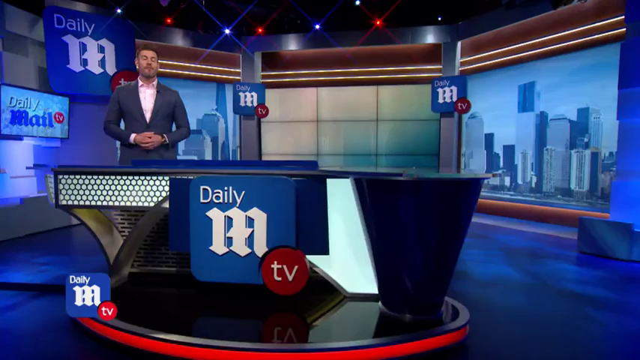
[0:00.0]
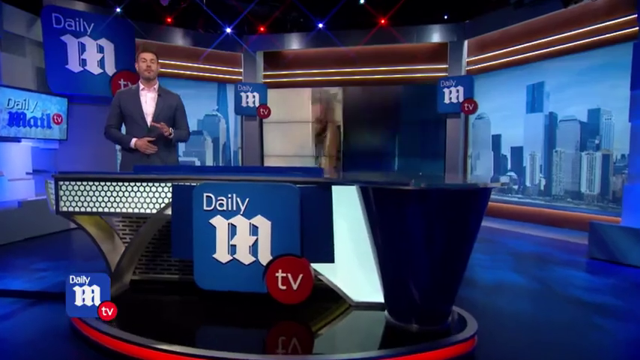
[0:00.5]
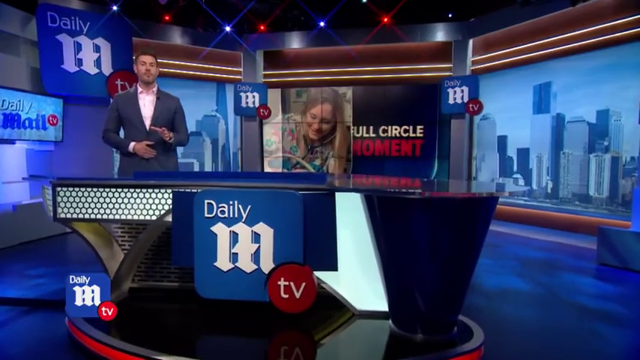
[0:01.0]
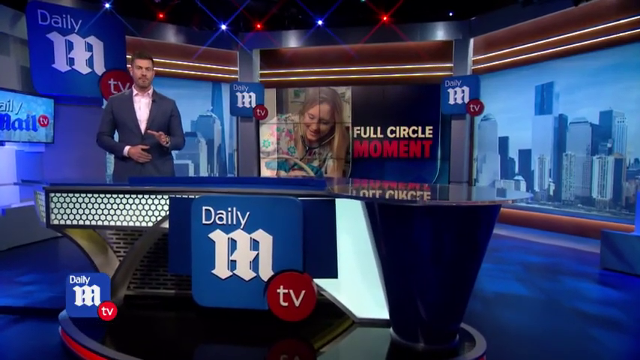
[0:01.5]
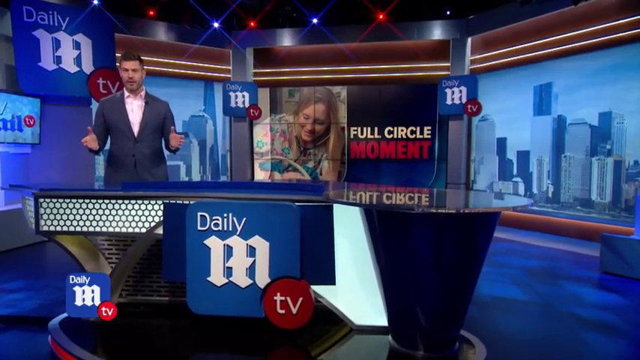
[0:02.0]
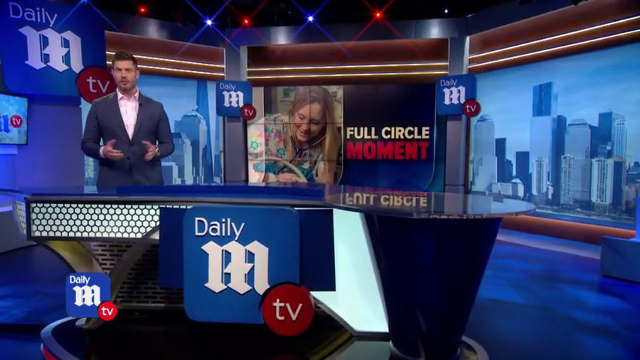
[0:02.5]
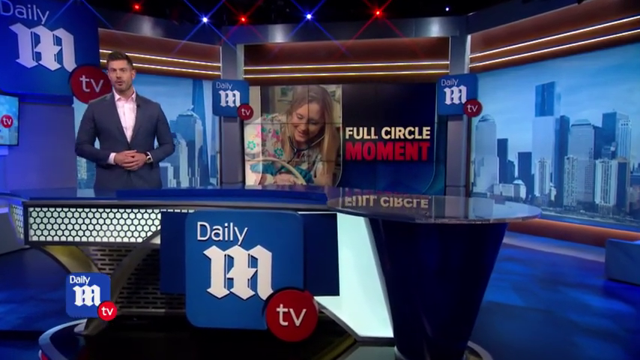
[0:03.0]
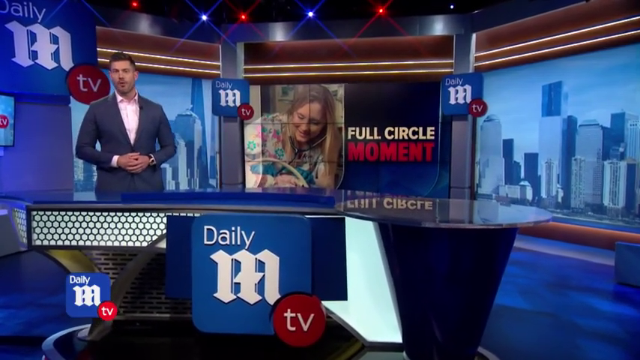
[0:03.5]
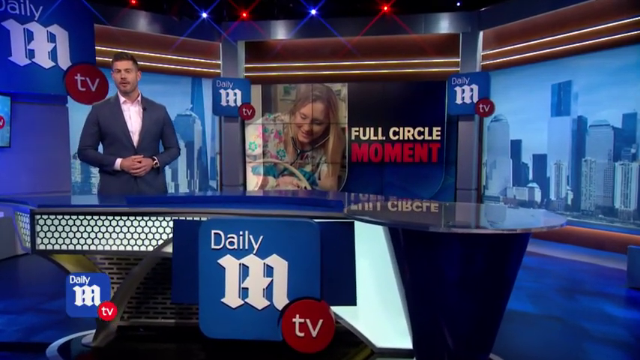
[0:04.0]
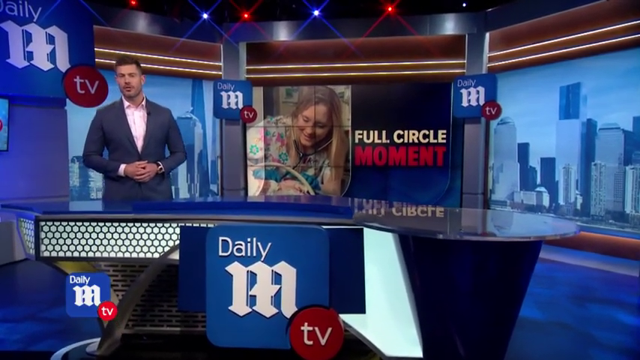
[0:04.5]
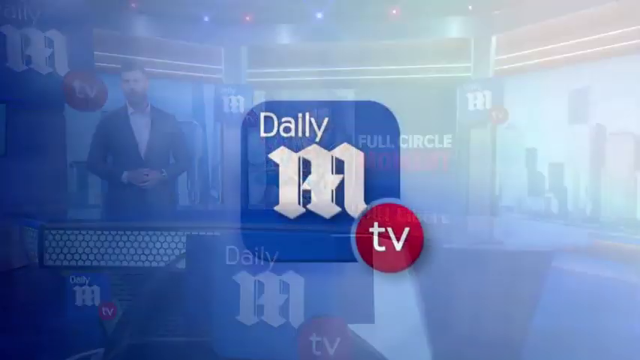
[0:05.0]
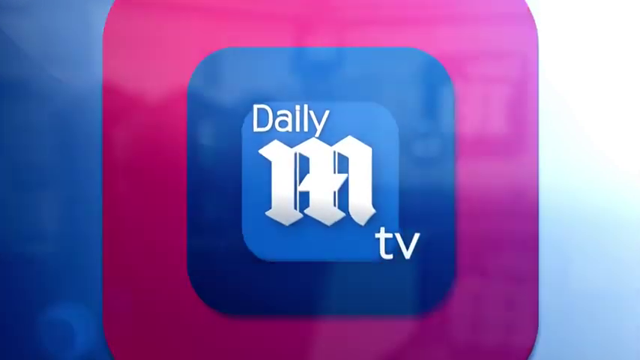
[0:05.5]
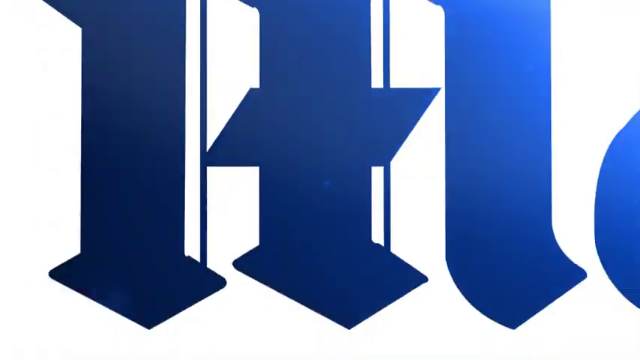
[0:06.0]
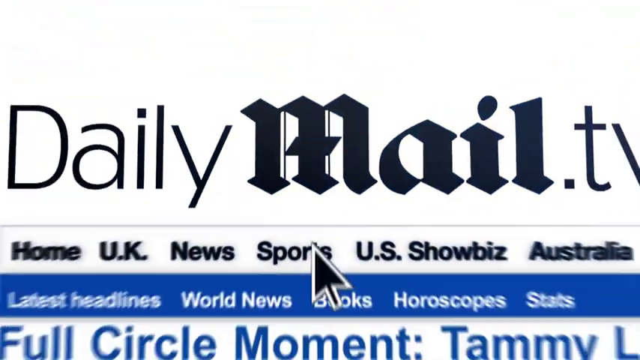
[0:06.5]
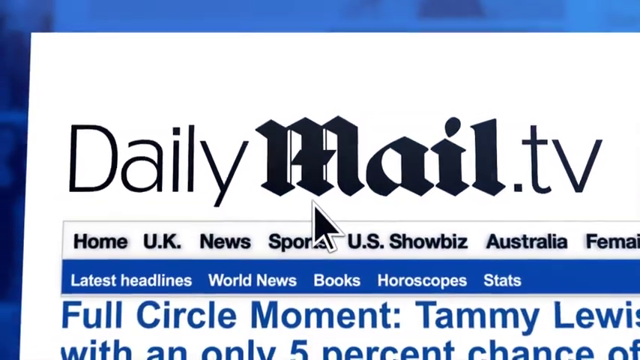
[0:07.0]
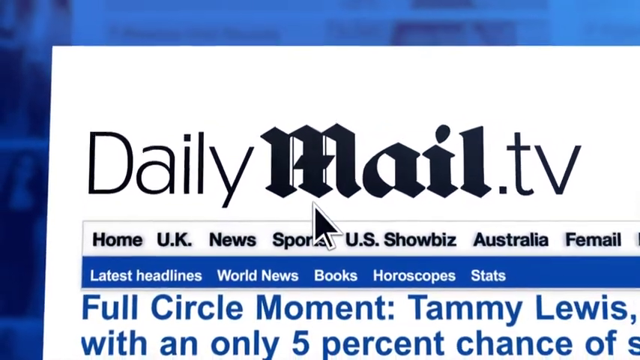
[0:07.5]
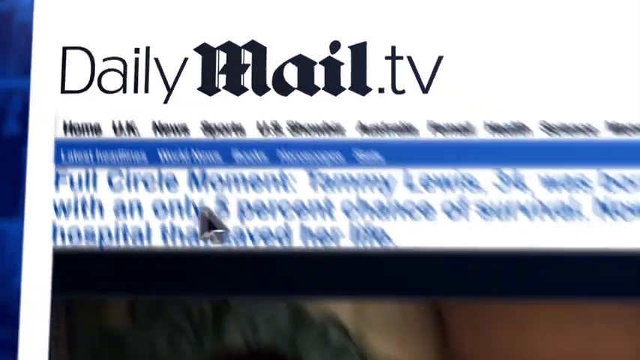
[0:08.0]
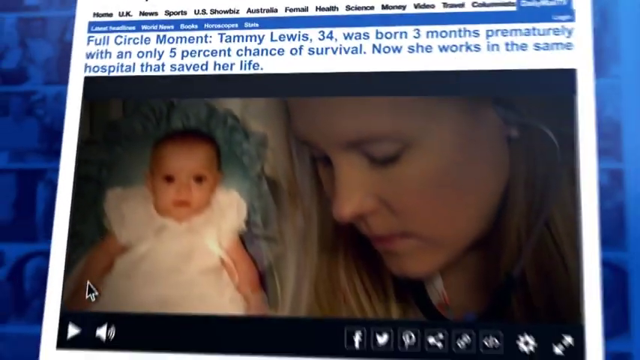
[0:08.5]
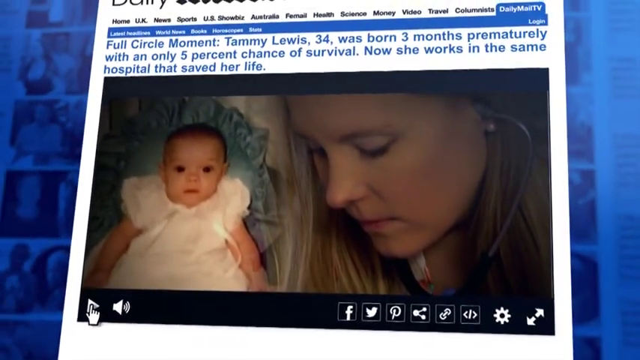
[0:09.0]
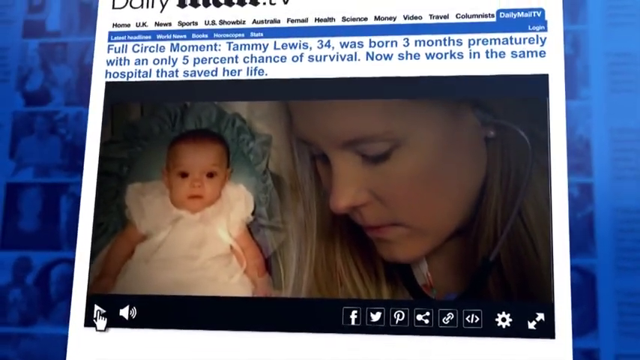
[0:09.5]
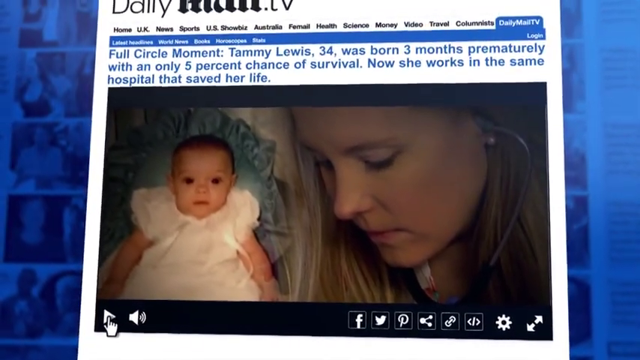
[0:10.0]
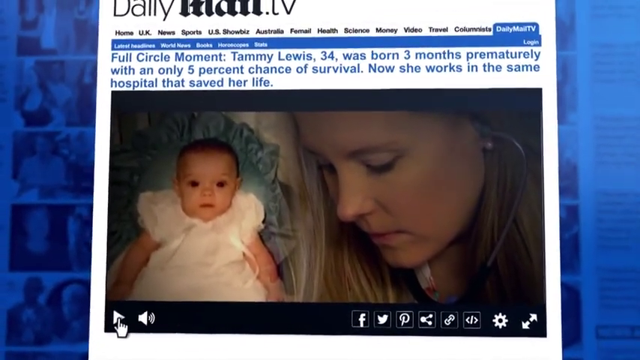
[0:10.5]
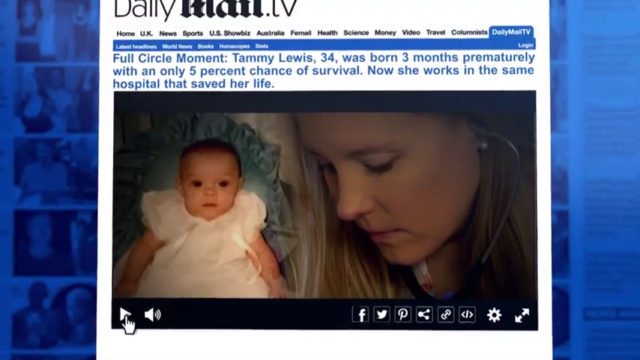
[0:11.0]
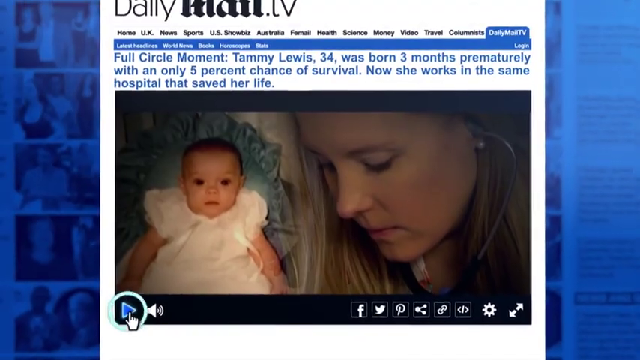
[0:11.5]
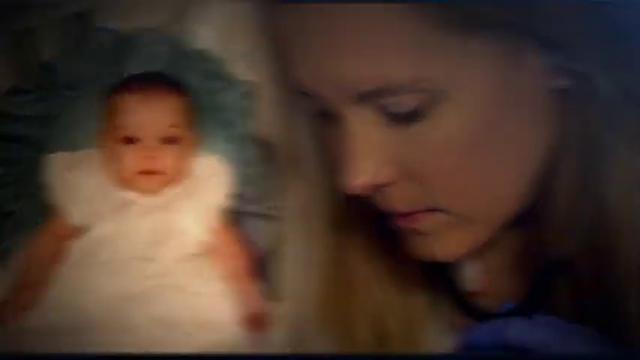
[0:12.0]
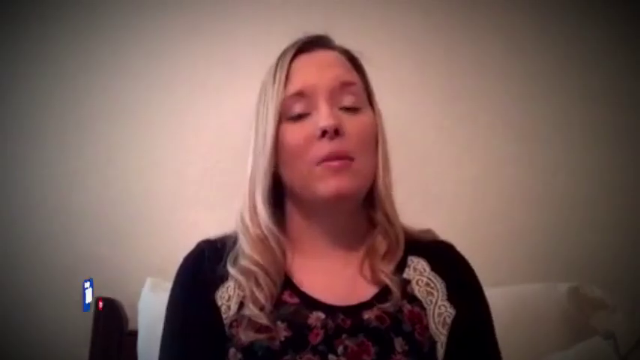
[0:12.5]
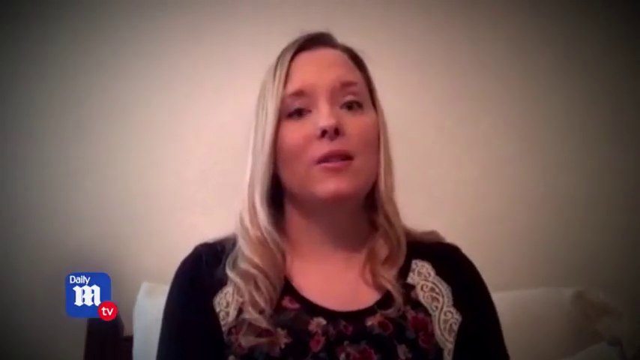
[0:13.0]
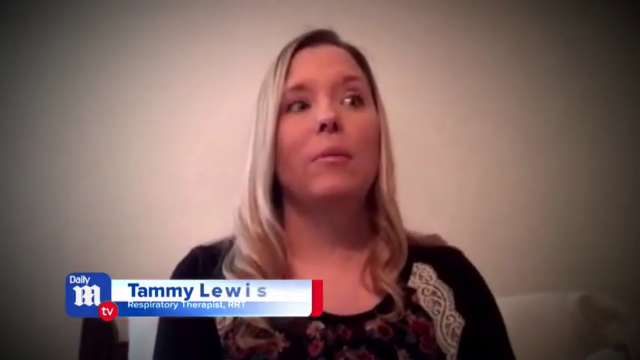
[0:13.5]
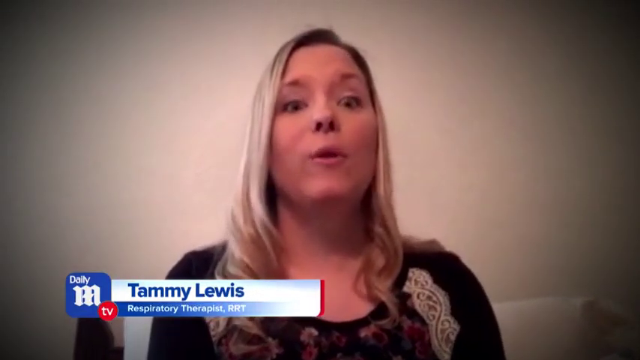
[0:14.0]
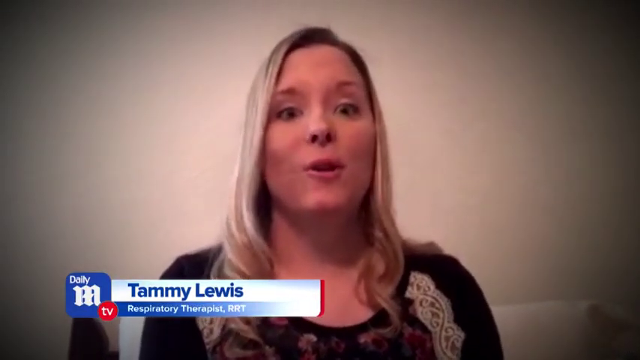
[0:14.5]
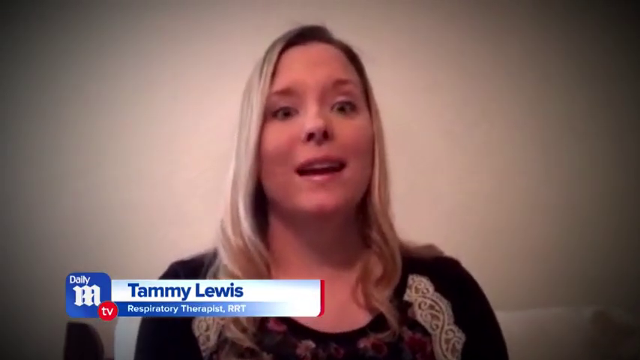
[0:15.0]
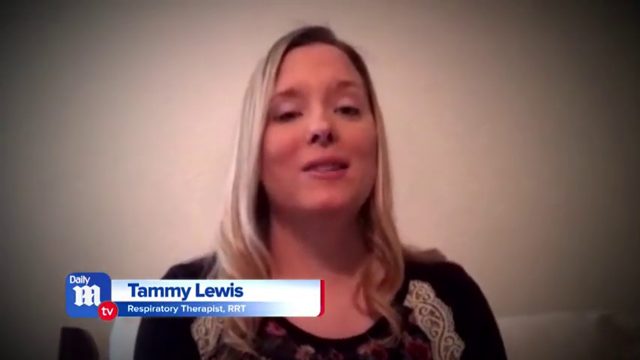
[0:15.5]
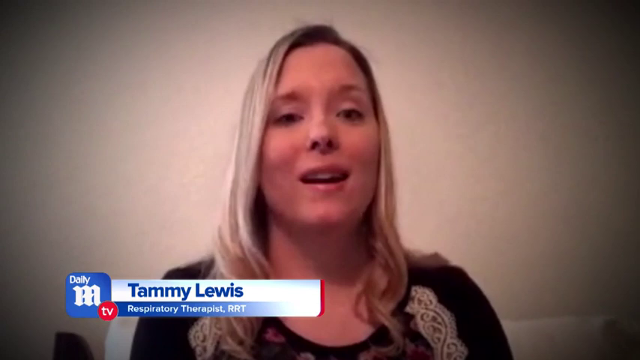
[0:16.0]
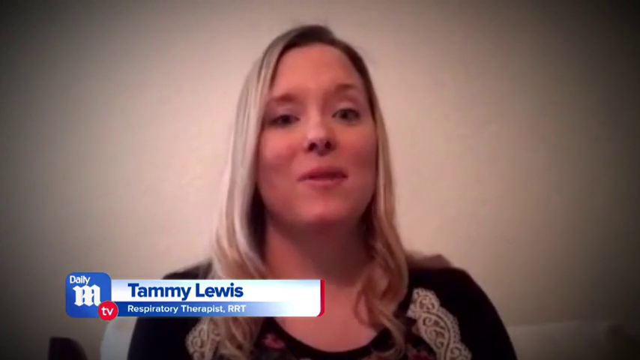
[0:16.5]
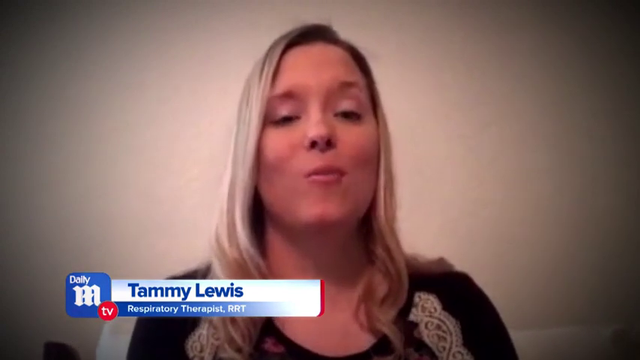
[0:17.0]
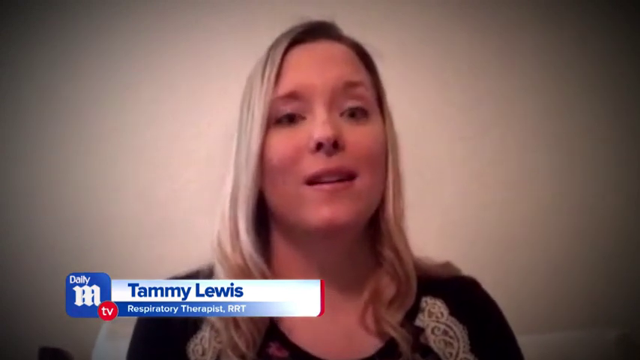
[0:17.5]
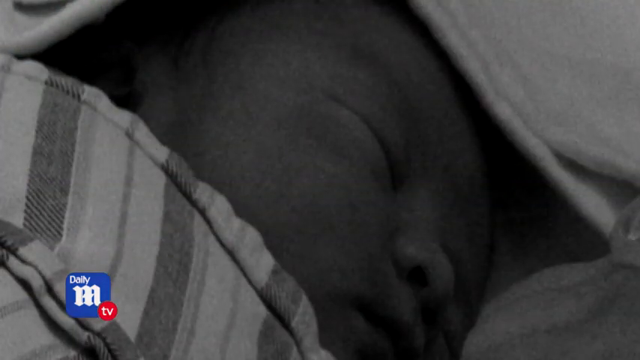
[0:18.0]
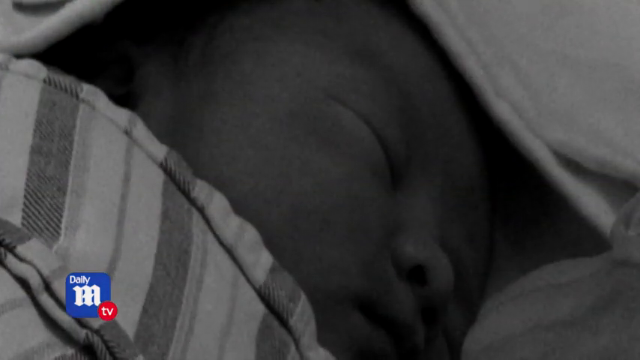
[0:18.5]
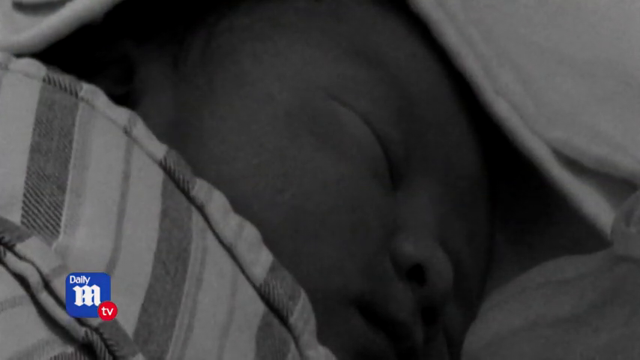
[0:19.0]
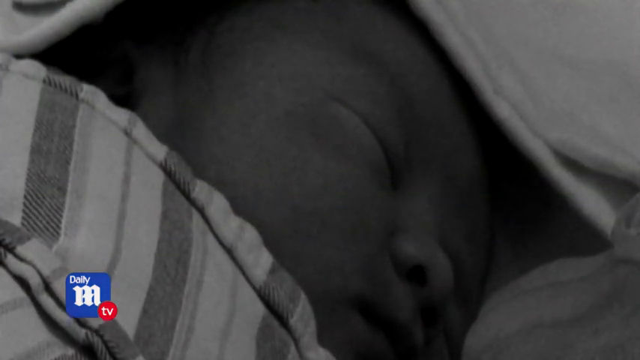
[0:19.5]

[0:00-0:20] What seems to be a live news broadcast carries the name "Daily M TV". A man is behind a table decorated with different shapes, including rectangles and triangles, over blue, which covers the whole area, and blue and red lights are on top. A TV screen shows a building within a city and reads "Daily M TV". Behind him, one of the television screens, the one in the middle, displays an image of a woman in the center, and next to it is written "a full circle moment", with "moment" in red. The view then moves to a Daily M TV page showing a tweet or article by Daily Mail TV, with headings reading "Home, UK, News, Sports, US, Showbiz, Australia and Female". Below them the headline reads "A full circle moment. Taimi Lewis, 34, was born 3 months prematurely with only a 5% chance of survival. Now she works in the".